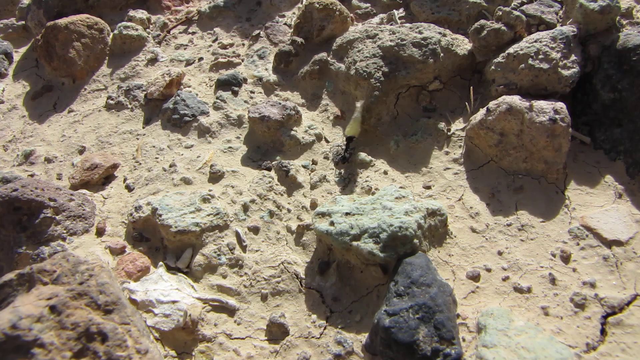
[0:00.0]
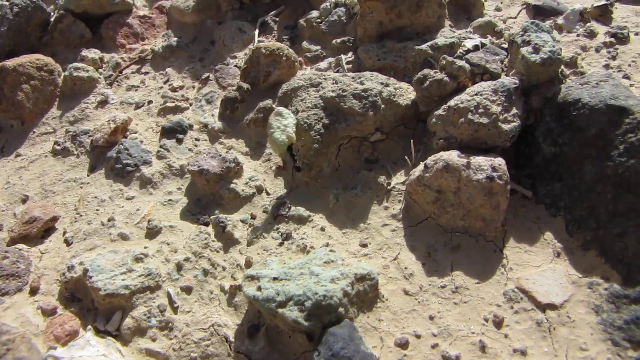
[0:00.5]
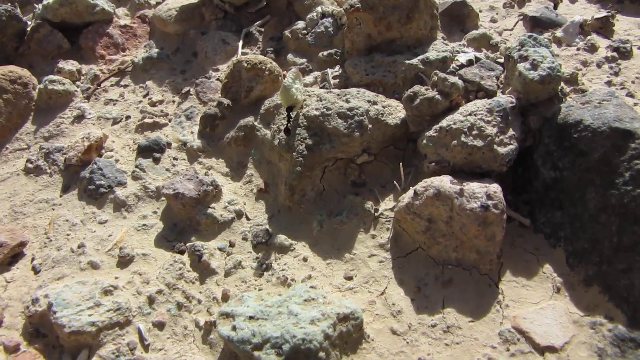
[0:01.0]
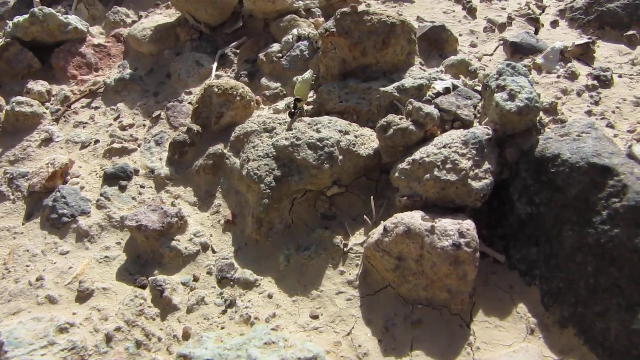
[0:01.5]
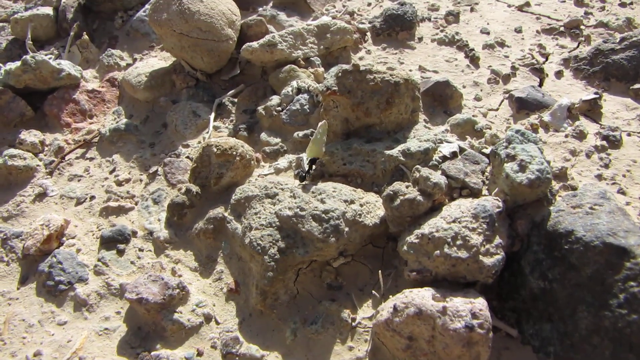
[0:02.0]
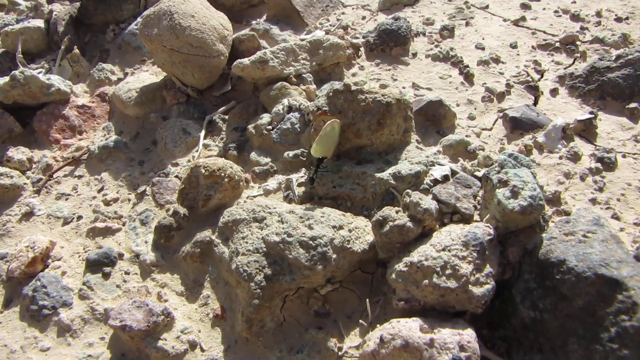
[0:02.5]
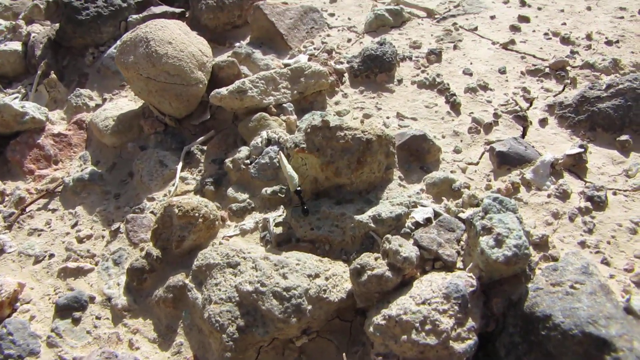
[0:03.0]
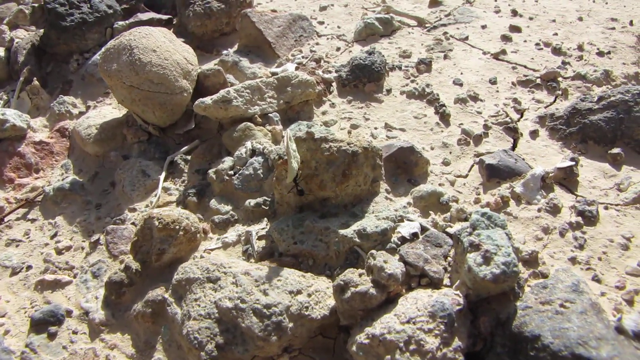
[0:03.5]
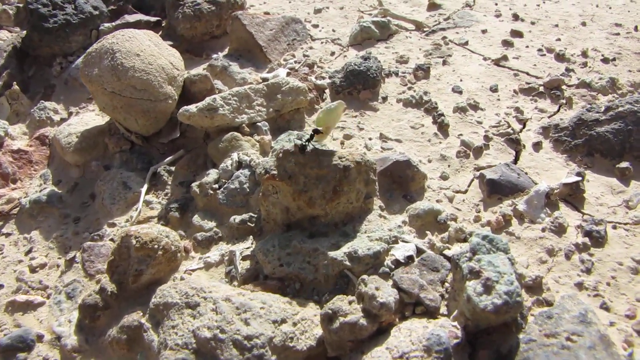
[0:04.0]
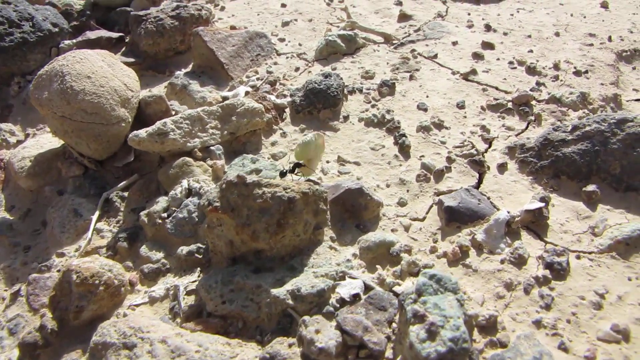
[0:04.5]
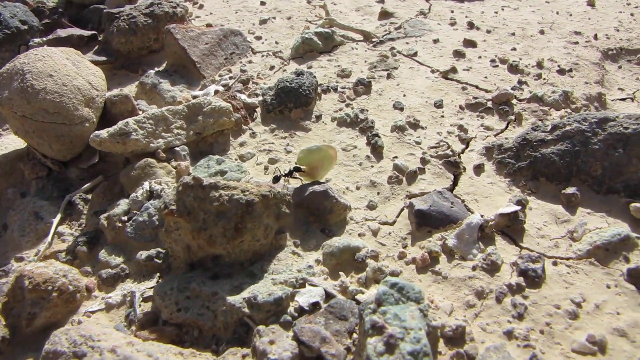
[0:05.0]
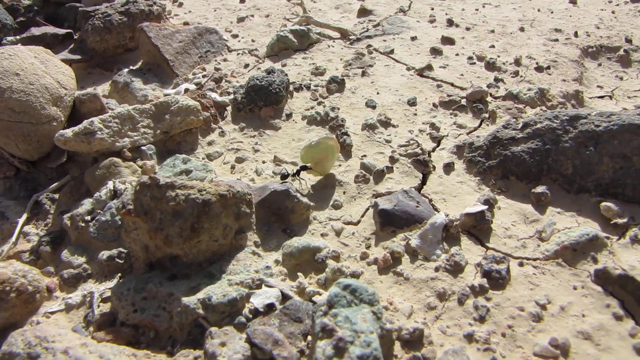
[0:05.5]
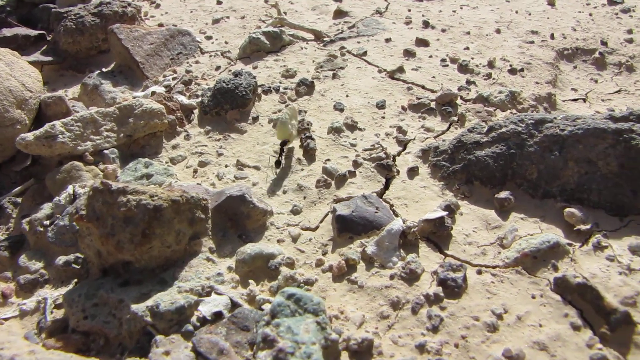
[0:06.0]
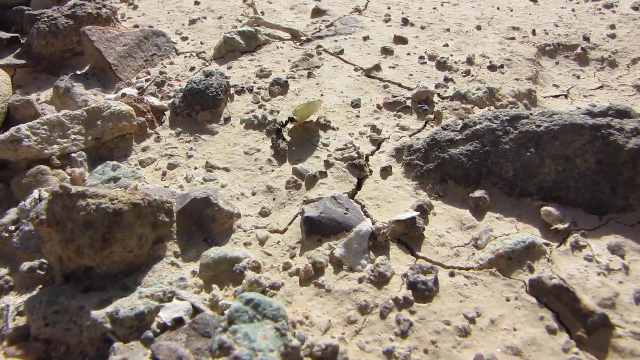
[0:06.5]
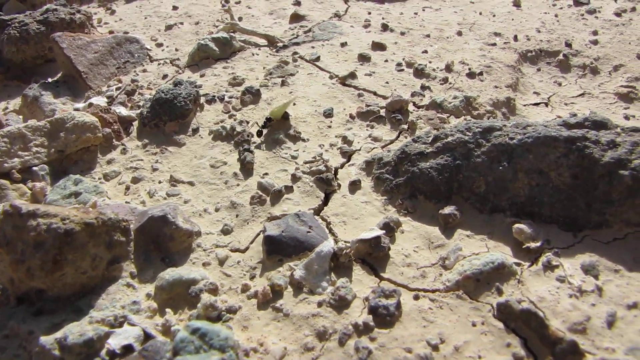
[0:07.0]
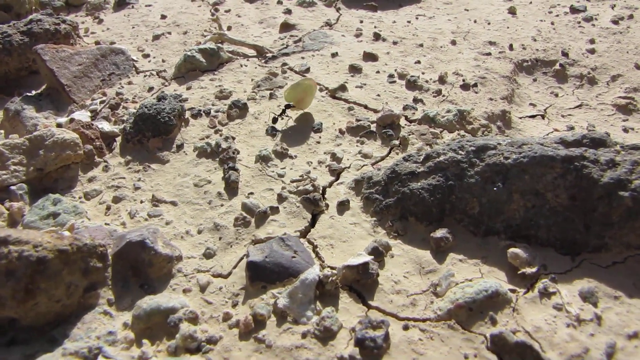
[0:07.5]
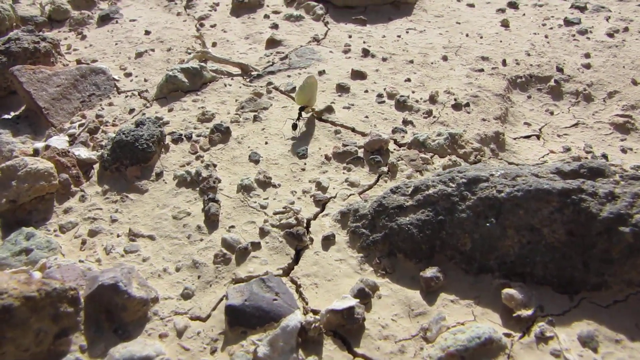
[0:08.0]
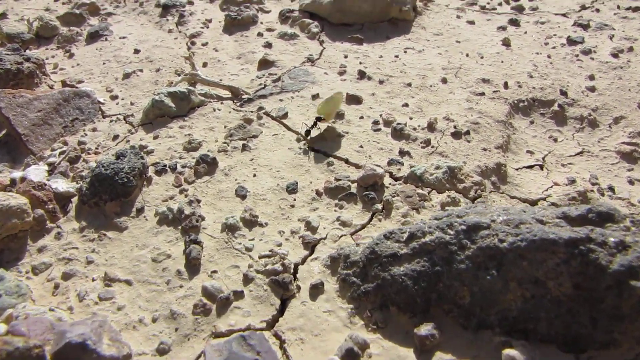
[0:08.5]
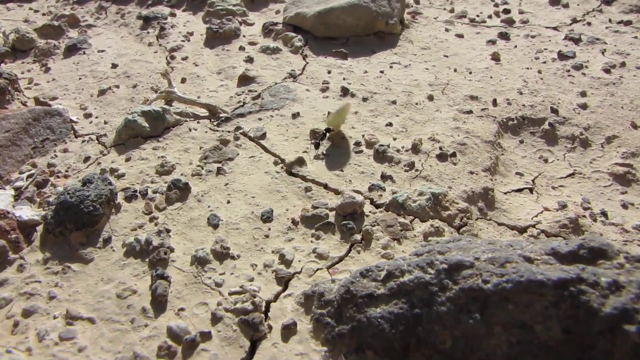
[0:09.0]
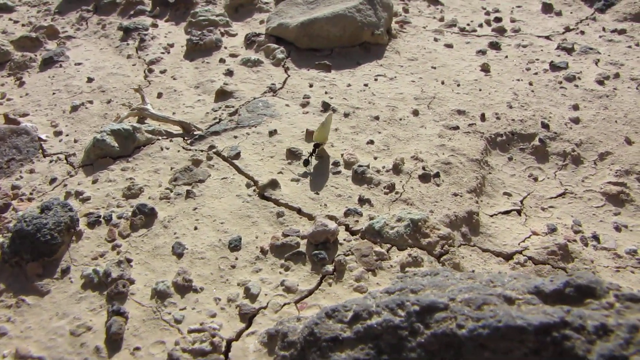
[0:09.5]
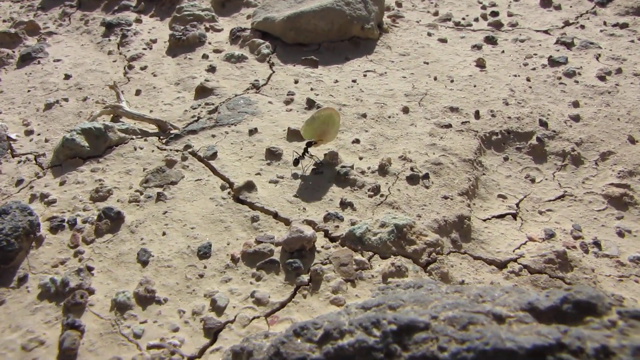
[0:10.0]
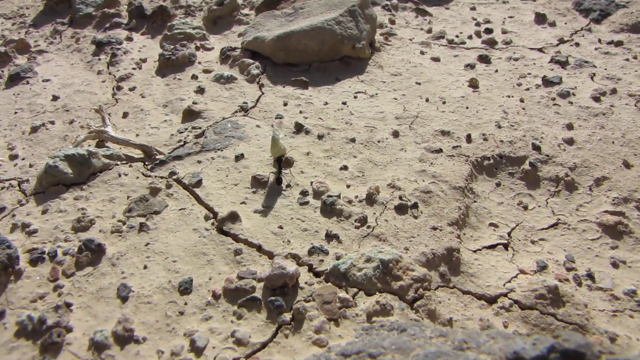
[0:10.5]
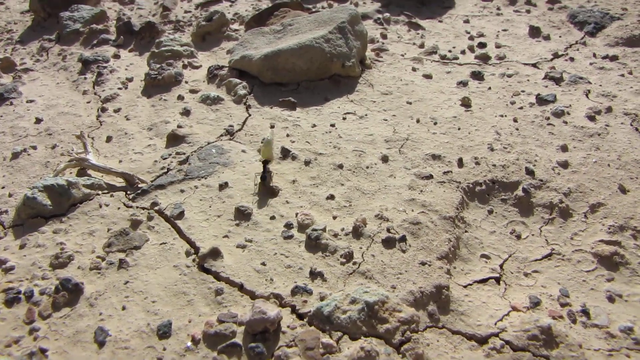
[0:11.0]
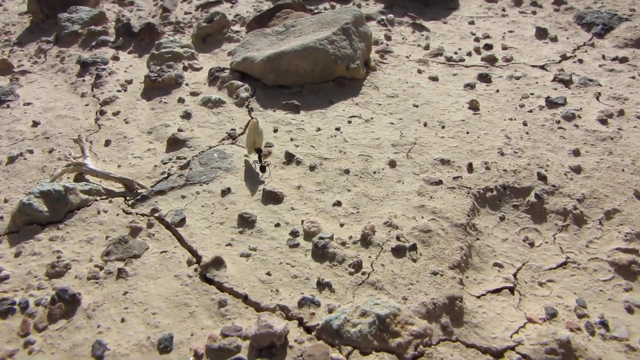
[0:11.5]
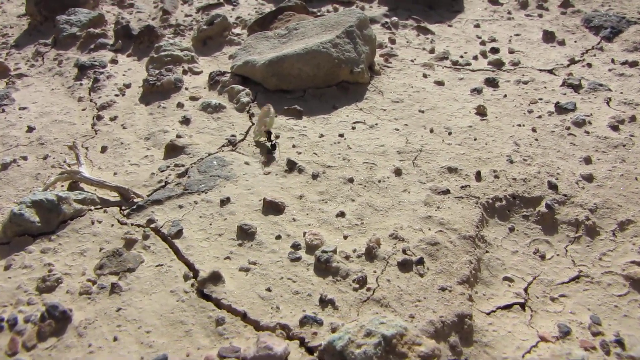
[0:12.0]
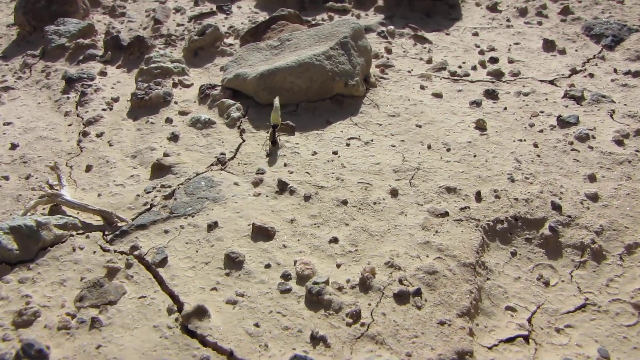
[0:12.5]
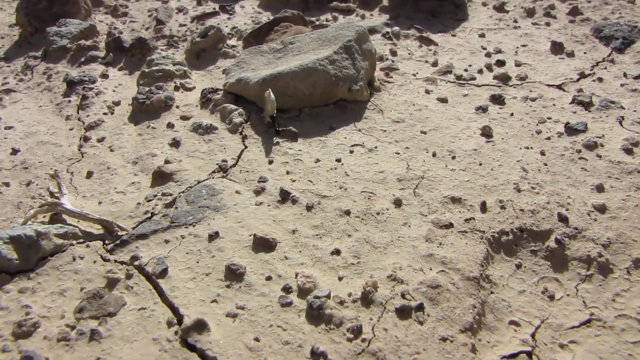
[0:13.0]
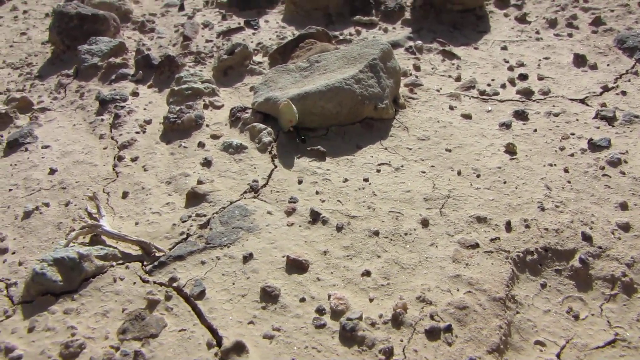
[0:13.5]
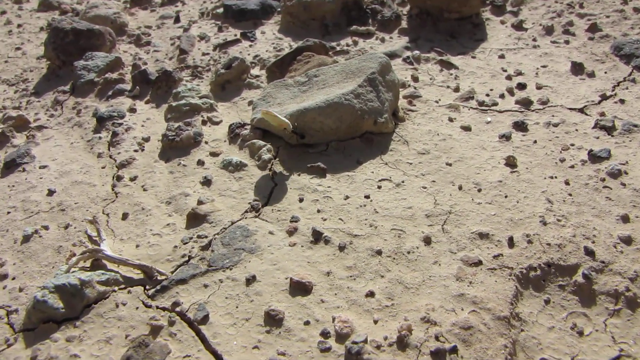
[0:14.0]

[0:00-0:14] What looks to be a rocky hillside or dry desert appears in a short video. A black ant crawls up the hillside holding a large piece of material, a piece that is very large and bigger than its body. The ant travels over the dry, cracked, rocky hillside, seemingly bringing the piece it has in its mouth possibly to its home. The person recording follows the ant as it goes through the landscape. Overall, the climate looks to be dry, and it appears sunny outside.